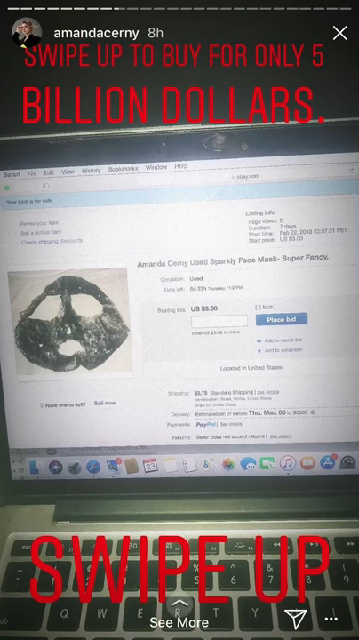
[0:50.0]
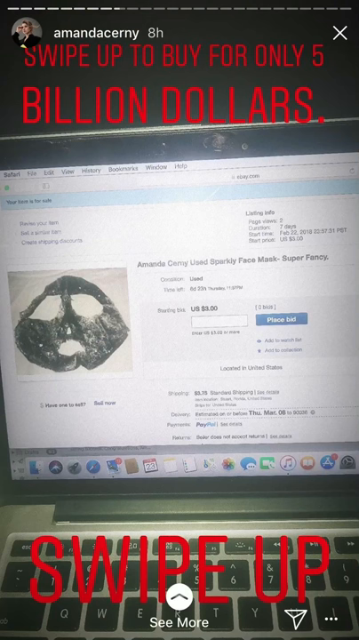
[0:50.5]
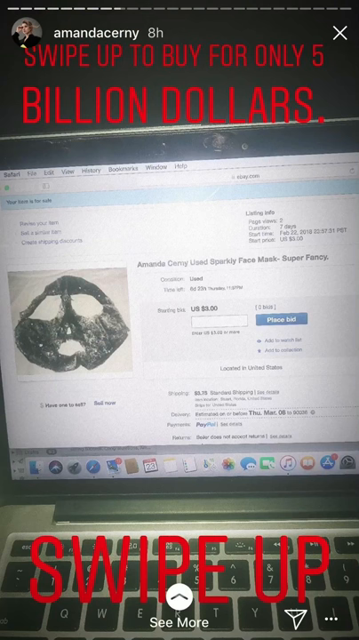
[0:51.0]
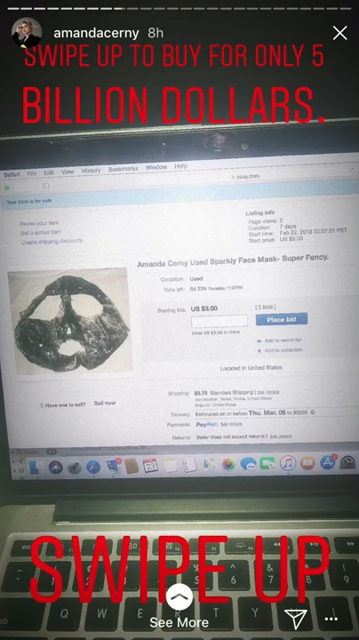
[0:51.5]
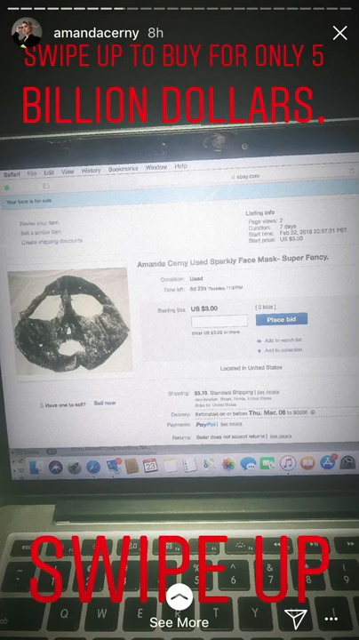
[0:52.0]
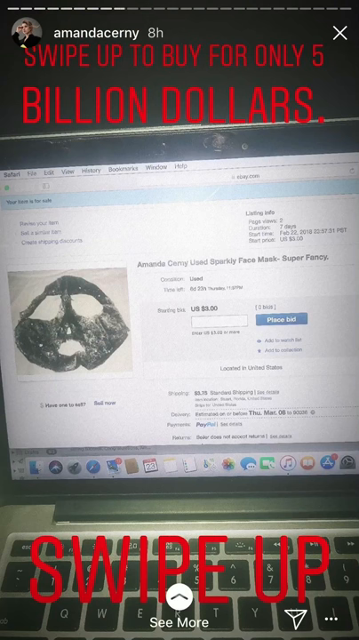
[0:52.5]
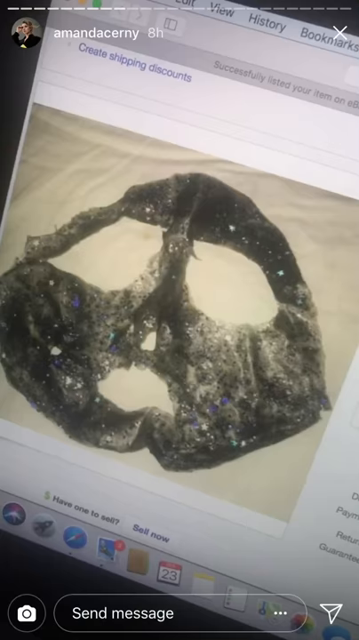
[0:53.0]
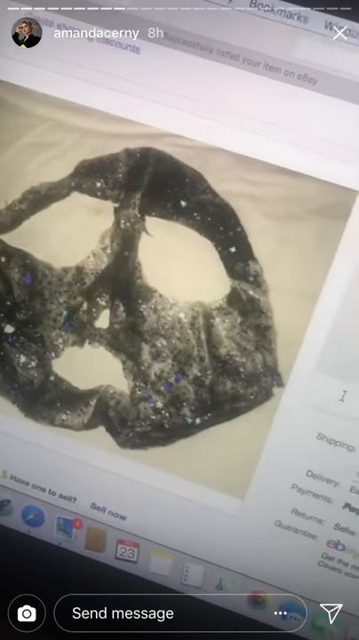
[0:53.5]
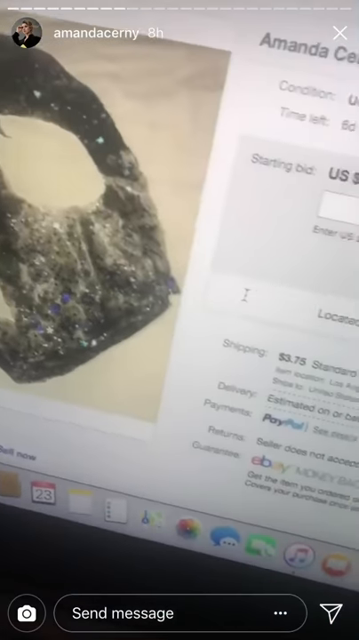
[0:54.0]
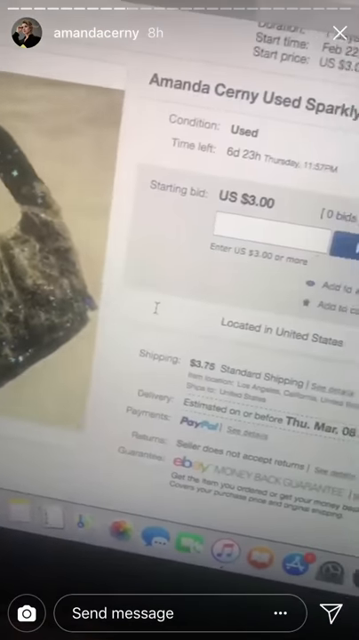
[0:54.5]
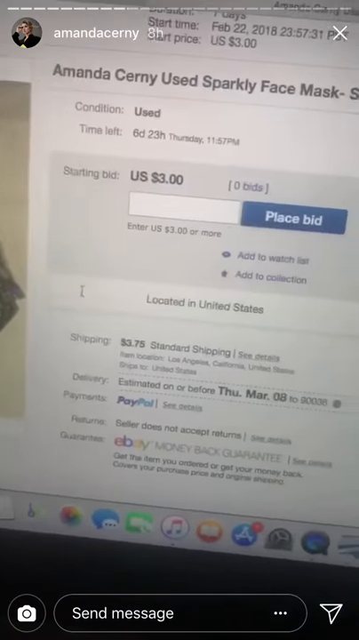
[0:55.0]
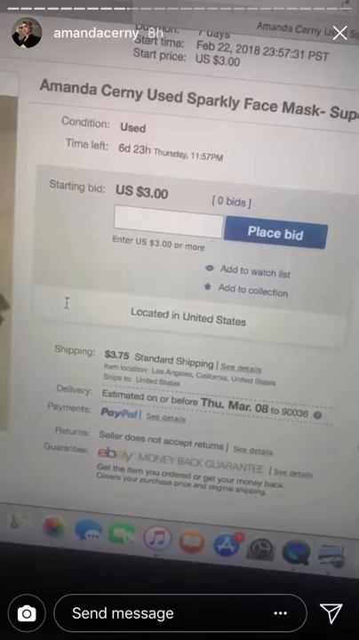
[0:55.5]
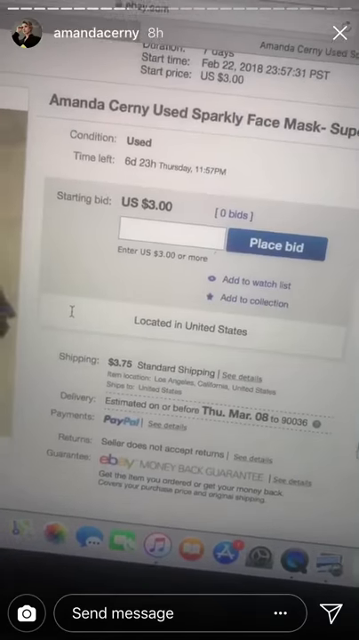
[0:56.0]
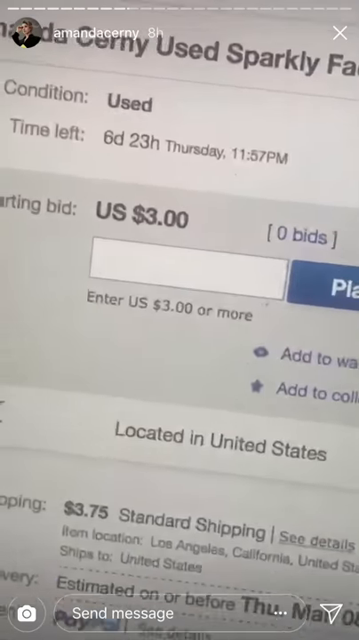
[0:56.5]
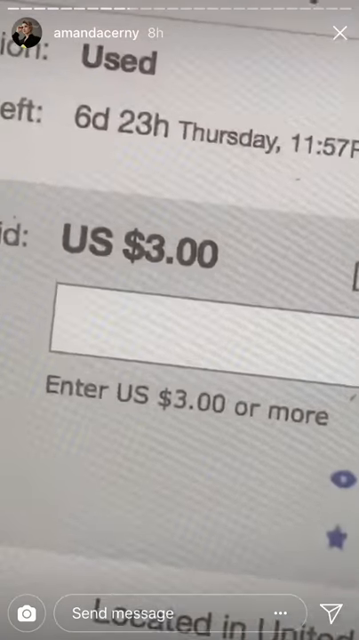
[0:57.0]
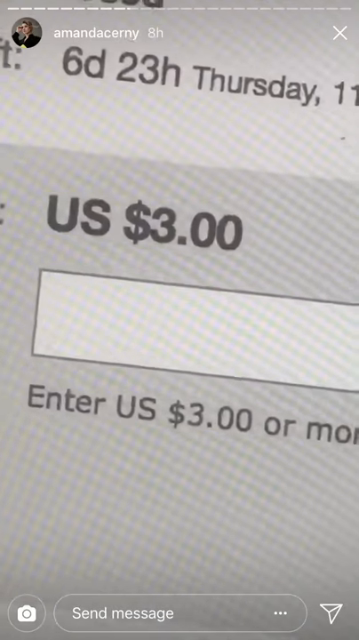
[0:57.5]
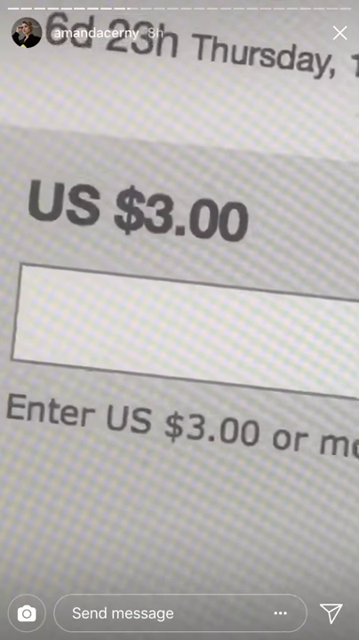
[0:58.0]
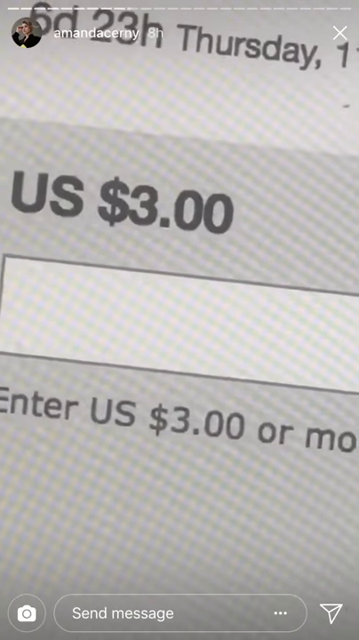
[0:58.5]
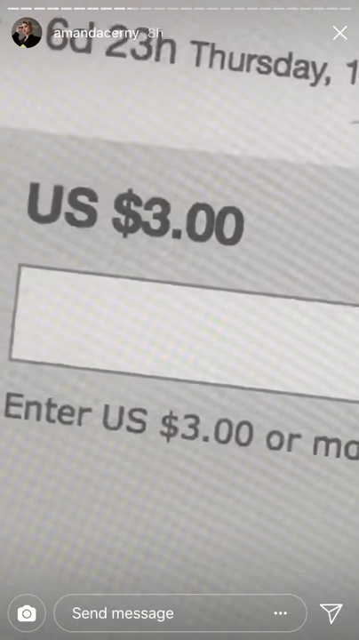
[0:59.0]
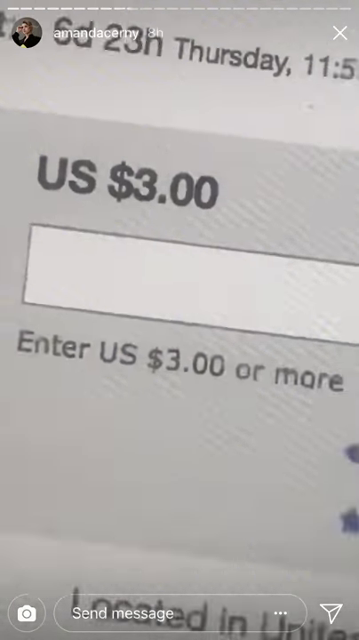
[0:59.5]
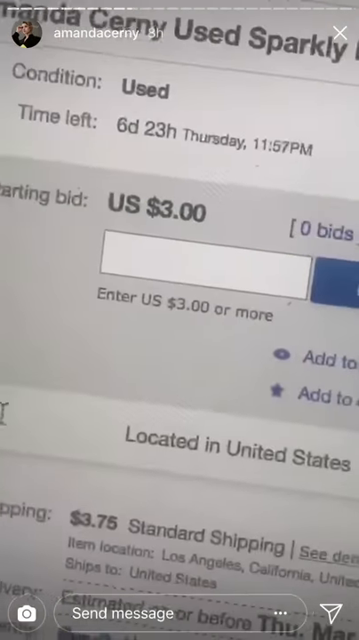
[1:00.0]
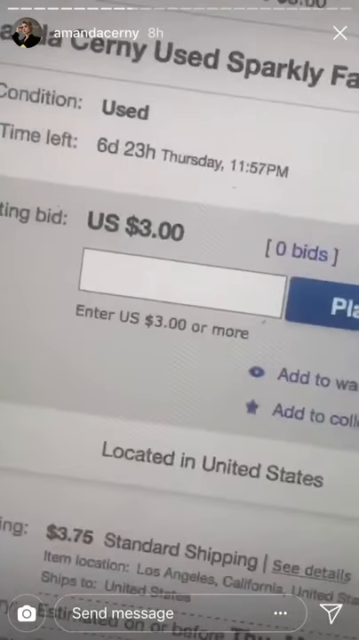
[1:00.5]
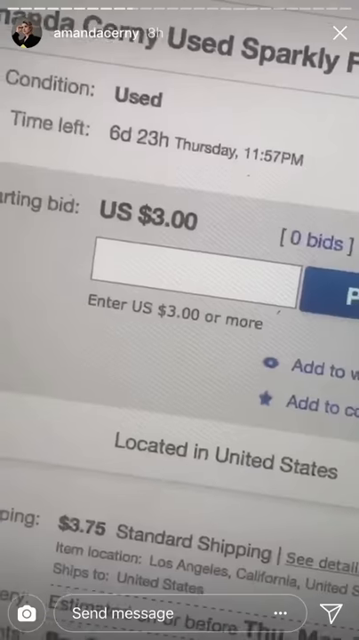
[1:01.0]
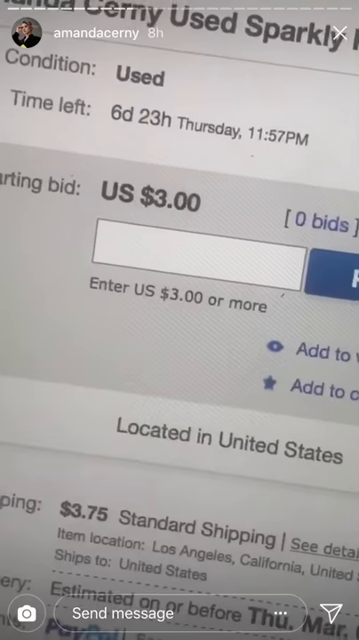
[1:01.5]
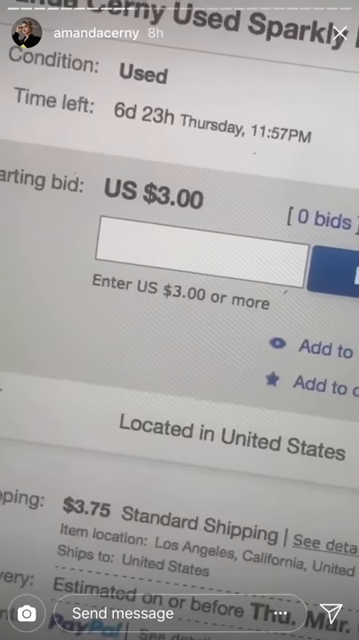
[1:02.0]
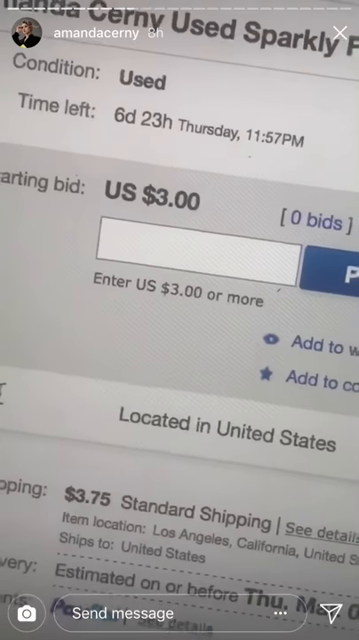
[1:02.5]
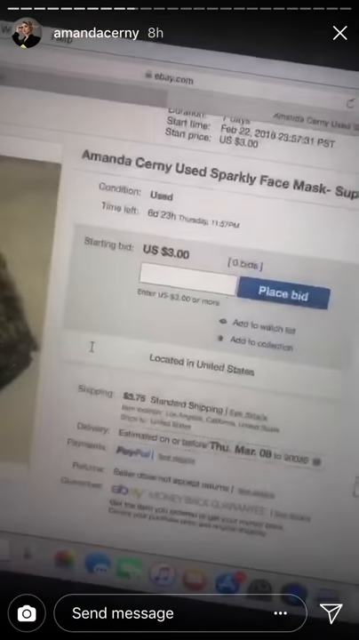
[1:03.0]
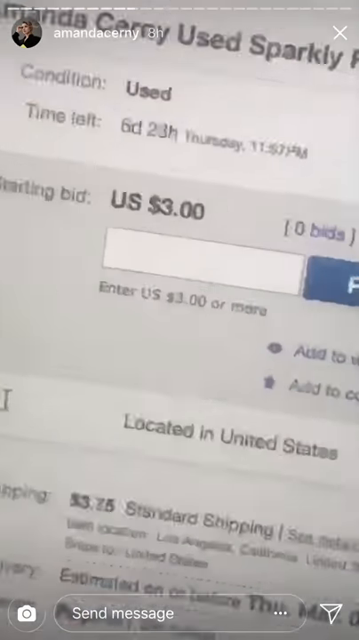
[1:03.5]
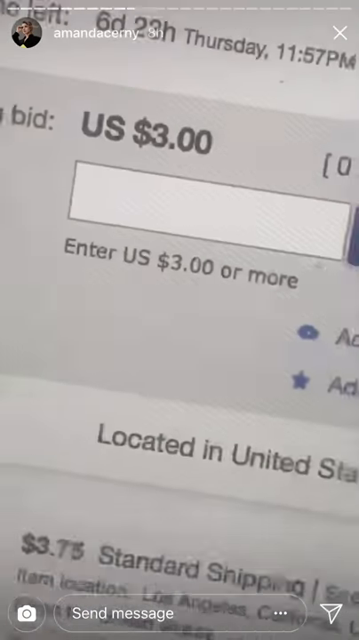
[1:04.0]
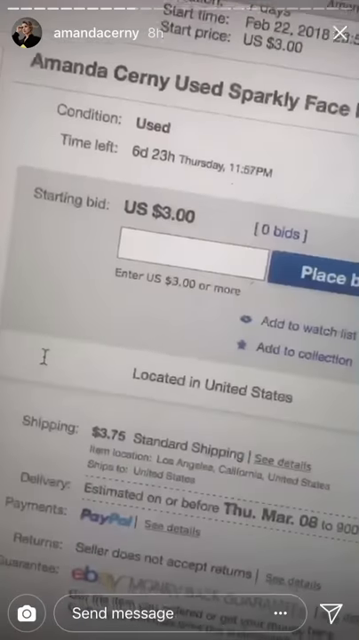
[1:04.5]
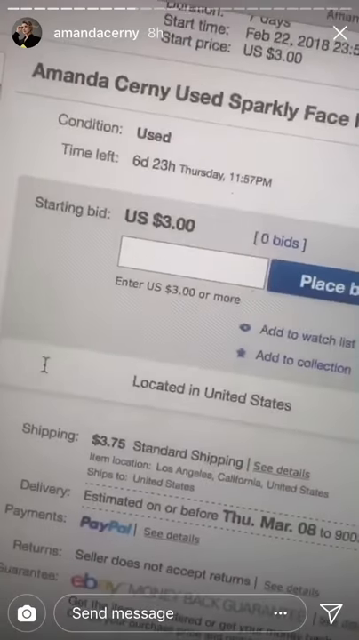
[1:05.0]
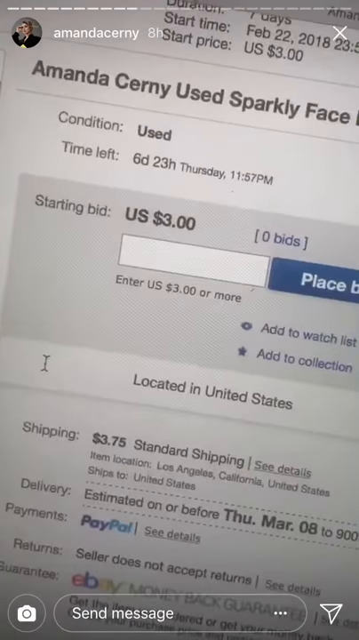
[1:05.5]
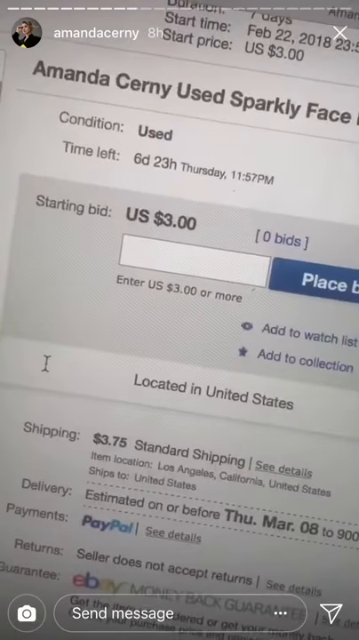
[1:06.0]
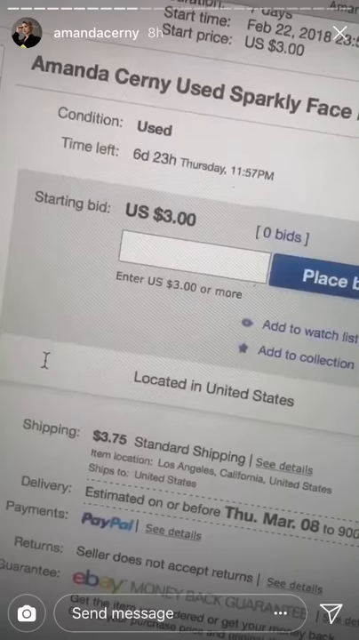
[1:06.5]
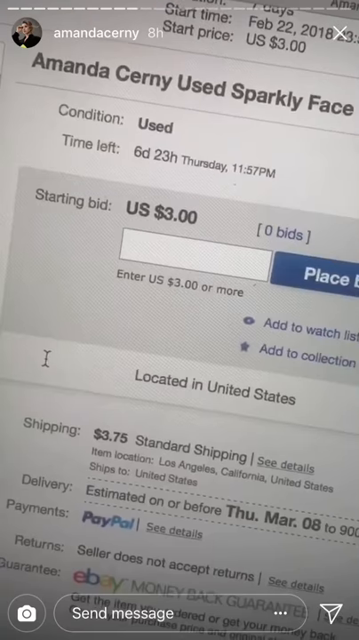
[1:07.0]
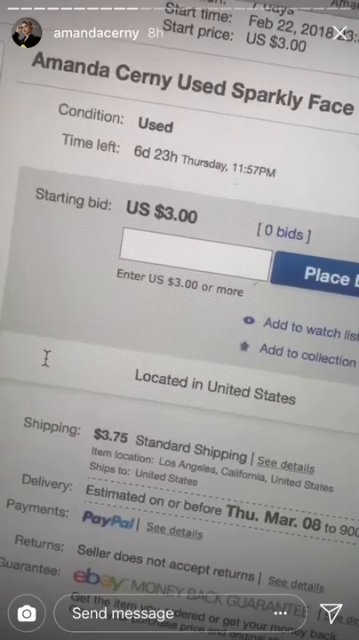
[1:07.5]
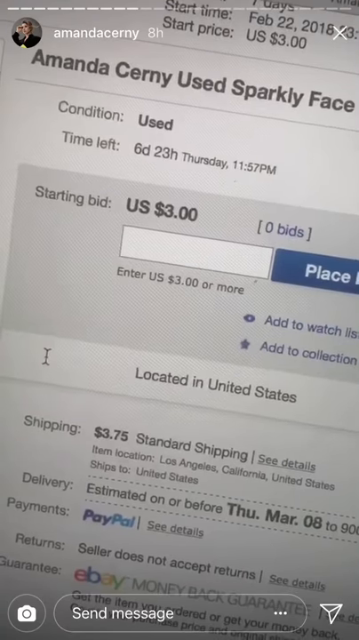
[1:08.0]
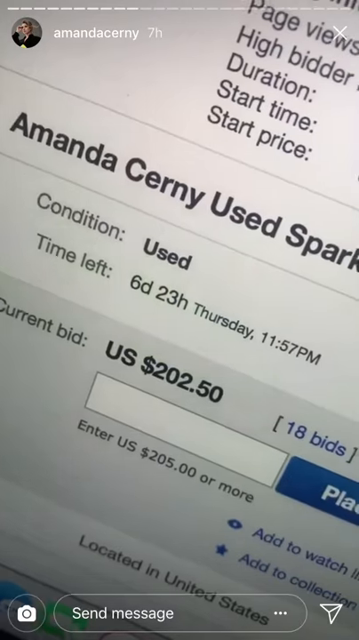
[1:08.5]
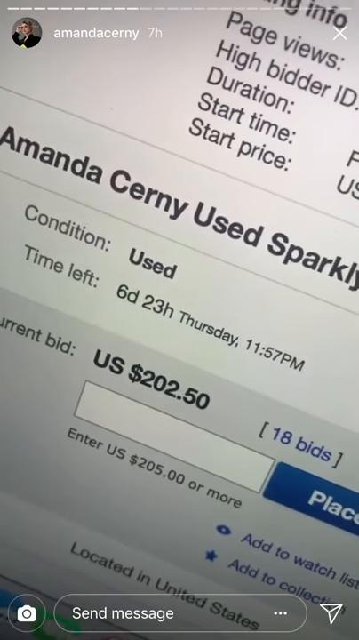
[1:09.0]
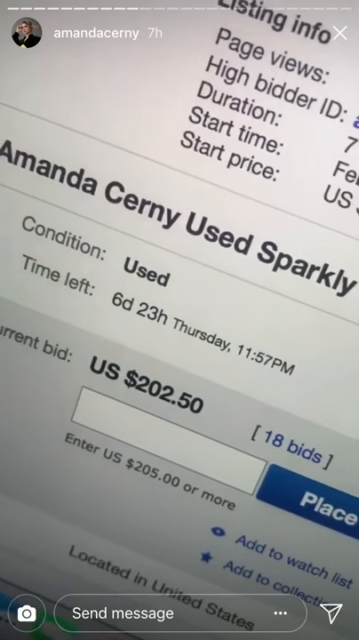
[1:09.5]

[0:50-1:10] An Instagram story from the account amandacerny, posted eight hours ago, shows red text reading "swipe up to buy for only $5 billion". Below the text is a mask and some text on the right that is hardly visible because the laptop screen is blurry, and at the bottom it says "swipe up". The video zooms in on a corner showing eBay information: located in United States, the date Thursday, March 6th, and a bid entry of 3 US dollars or more. It then zooms in on the payments accepted, PayPal, and on the shipping information: $3.75 standard shipping, estimated delivery on or before Thursday, 8th March. A screen then shows 18 bids and an amount of $202.50.